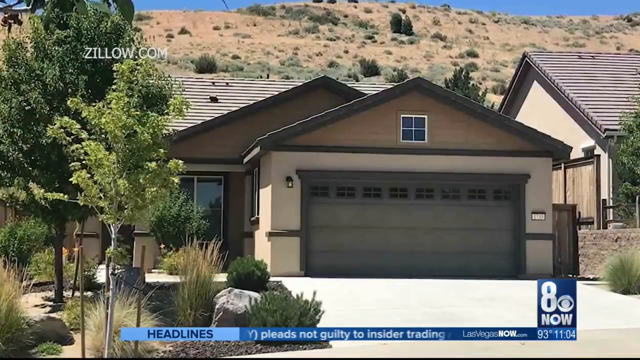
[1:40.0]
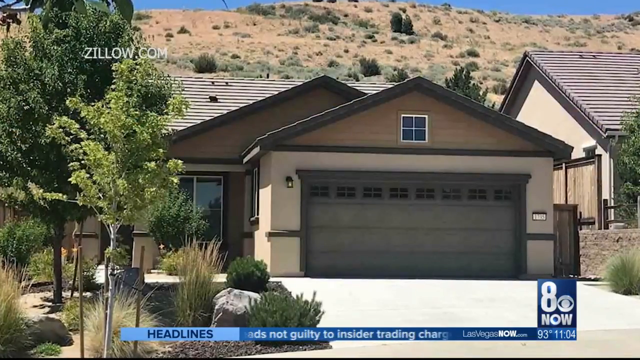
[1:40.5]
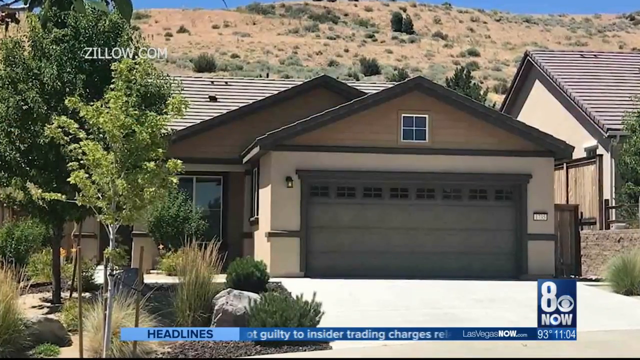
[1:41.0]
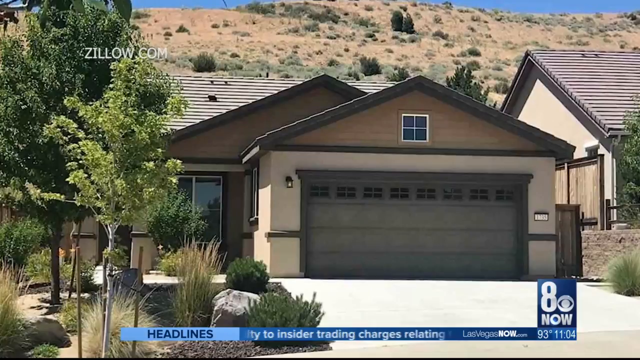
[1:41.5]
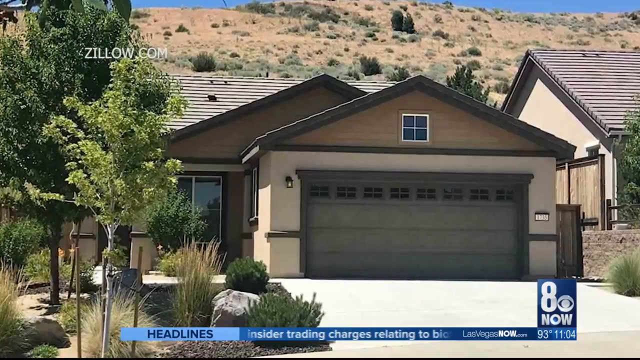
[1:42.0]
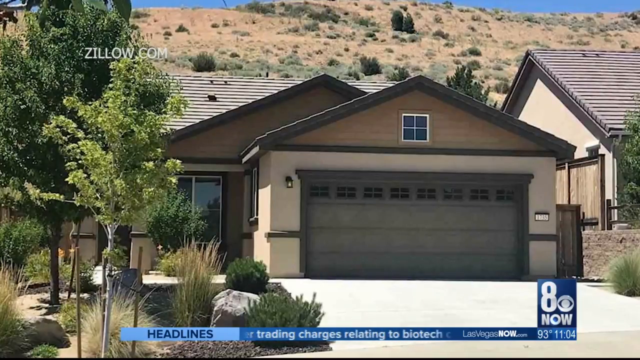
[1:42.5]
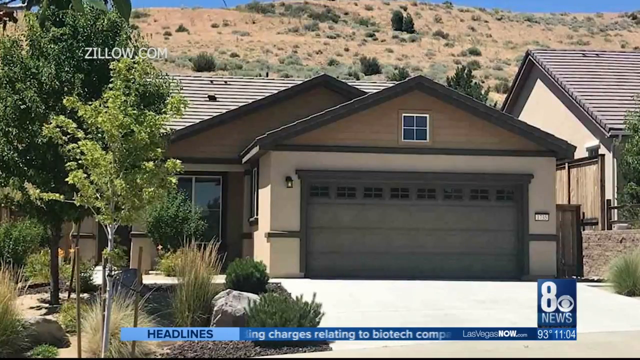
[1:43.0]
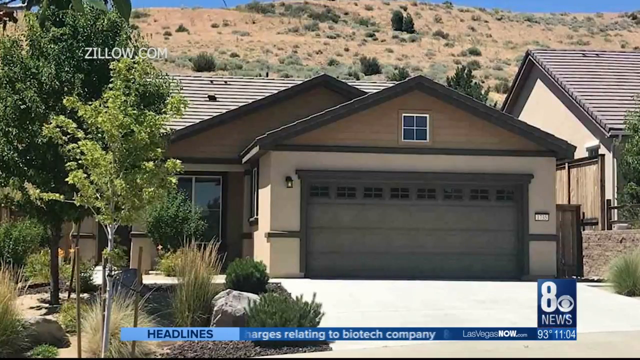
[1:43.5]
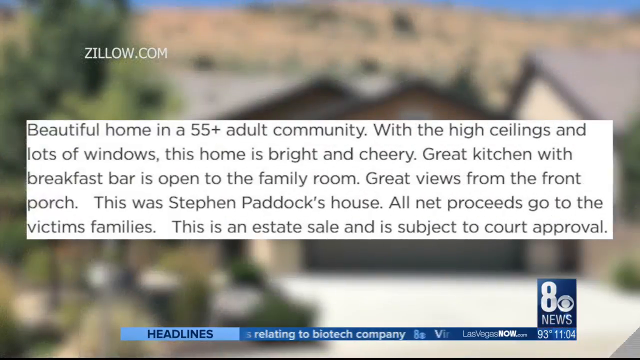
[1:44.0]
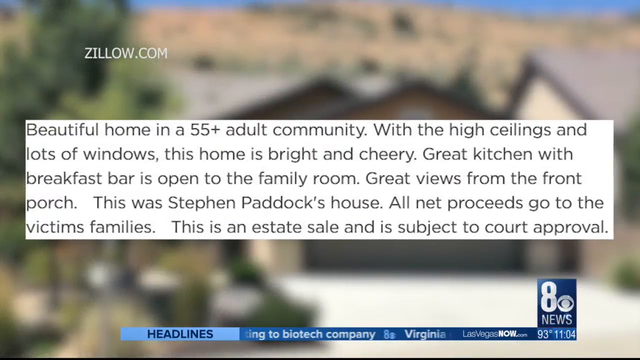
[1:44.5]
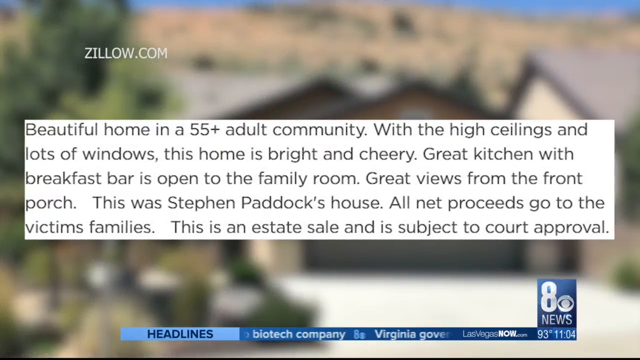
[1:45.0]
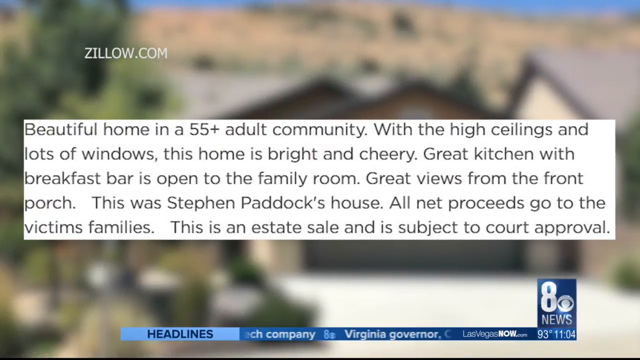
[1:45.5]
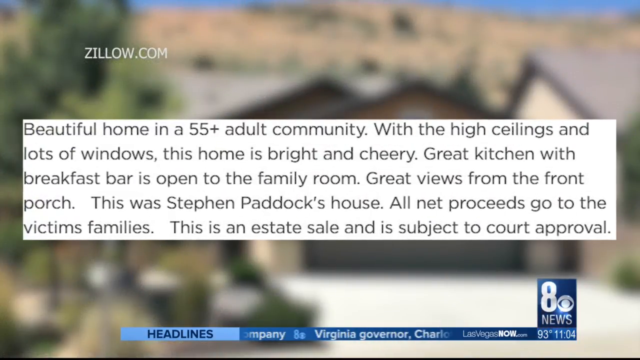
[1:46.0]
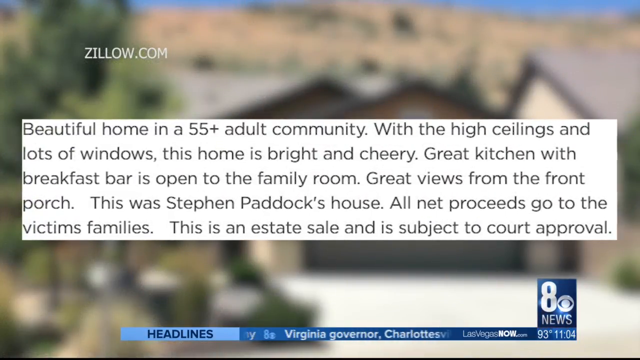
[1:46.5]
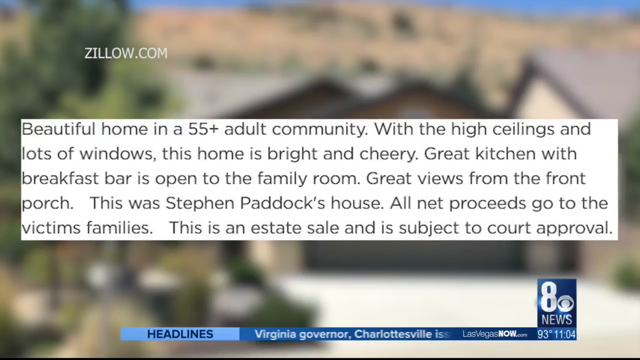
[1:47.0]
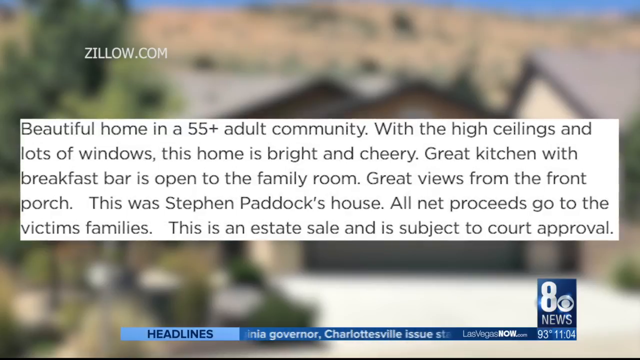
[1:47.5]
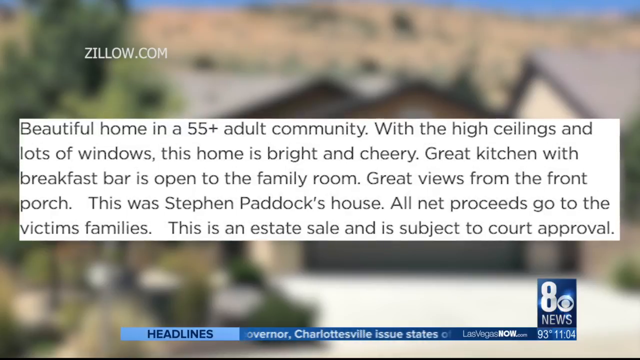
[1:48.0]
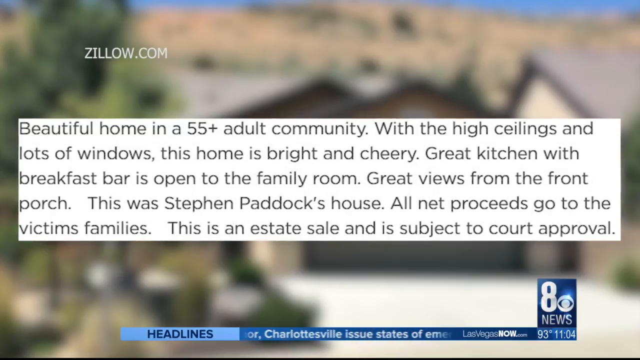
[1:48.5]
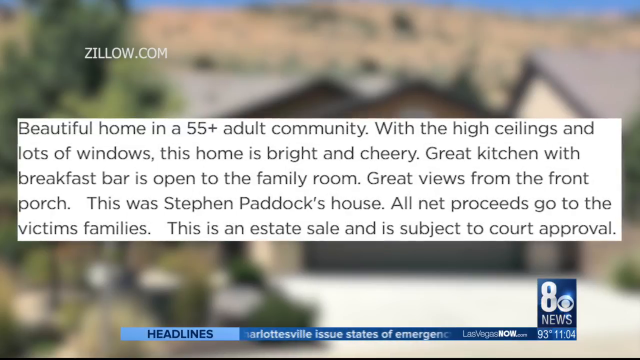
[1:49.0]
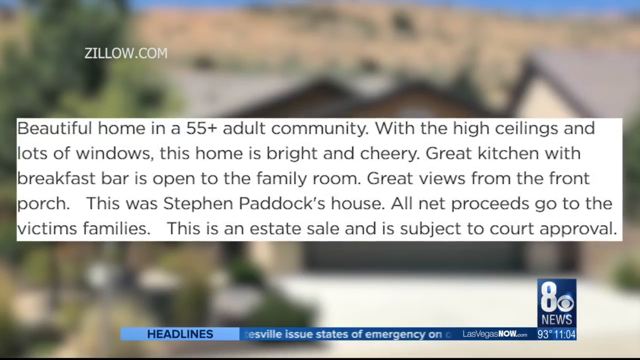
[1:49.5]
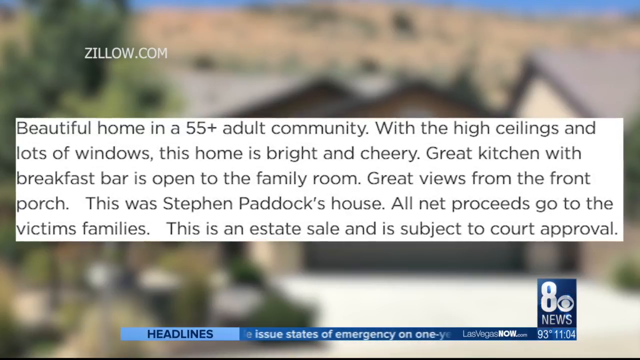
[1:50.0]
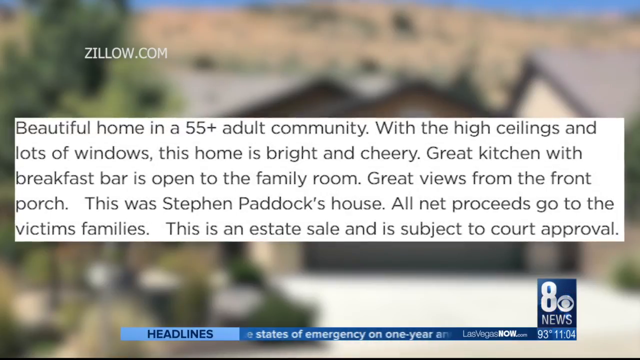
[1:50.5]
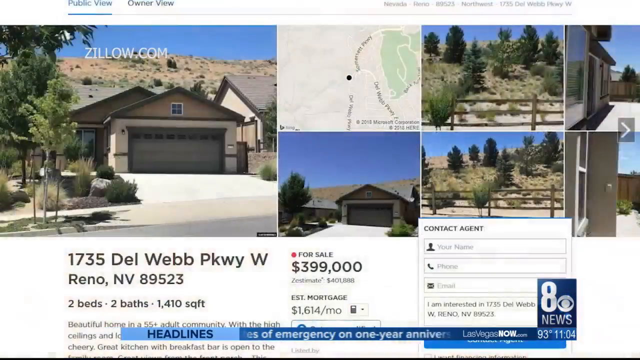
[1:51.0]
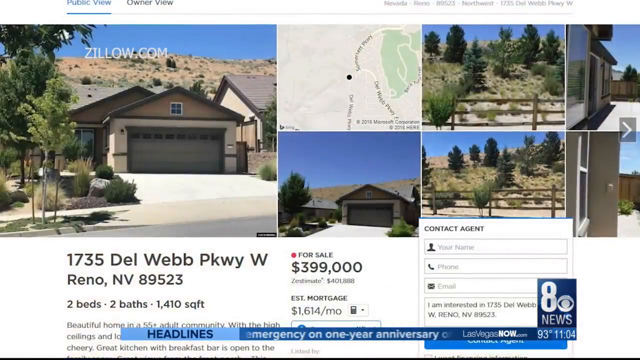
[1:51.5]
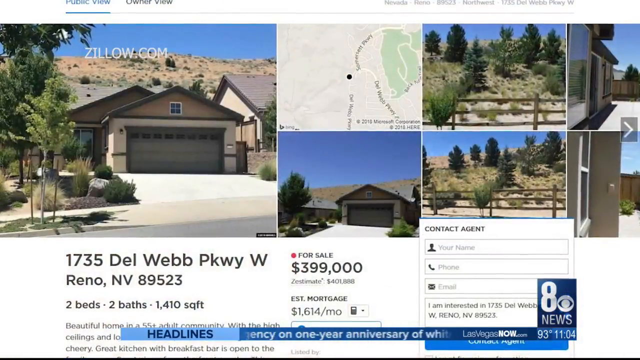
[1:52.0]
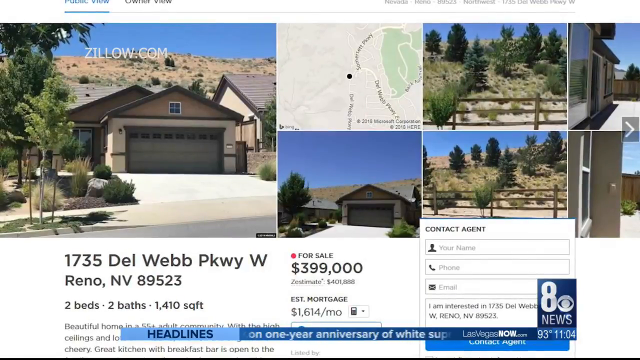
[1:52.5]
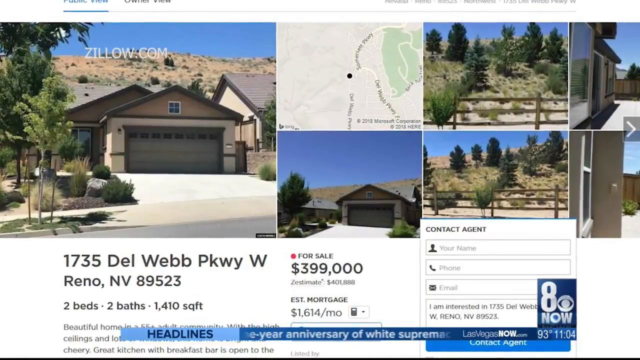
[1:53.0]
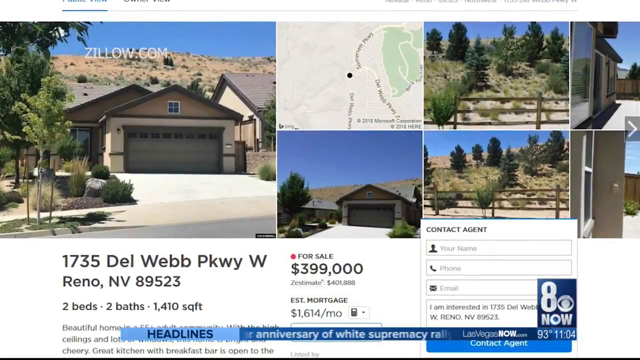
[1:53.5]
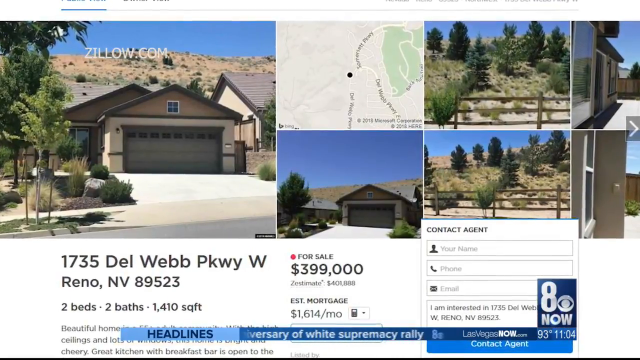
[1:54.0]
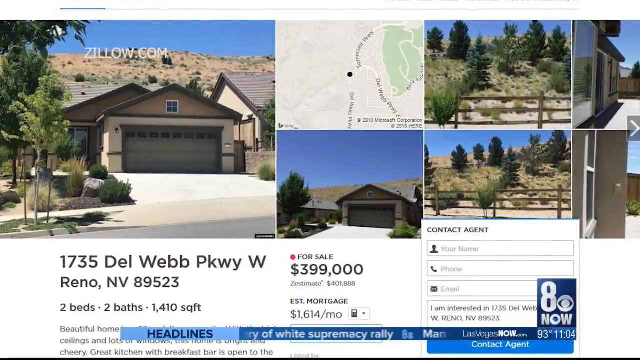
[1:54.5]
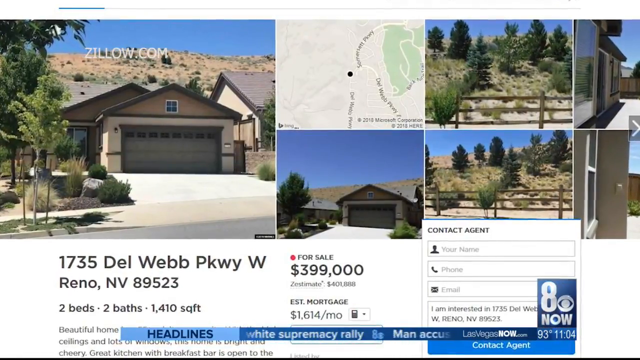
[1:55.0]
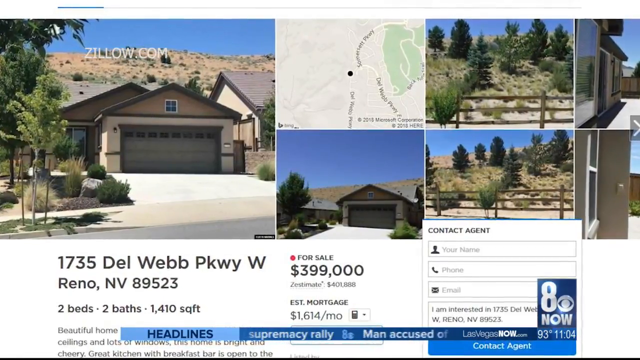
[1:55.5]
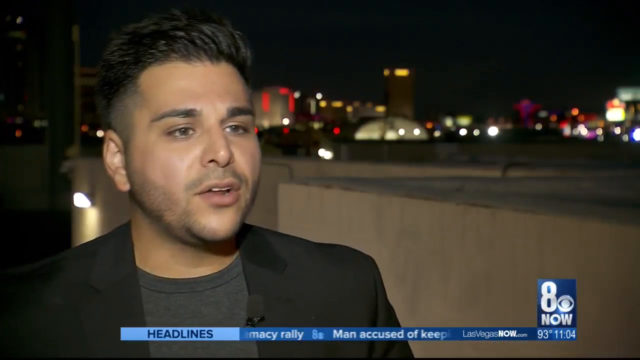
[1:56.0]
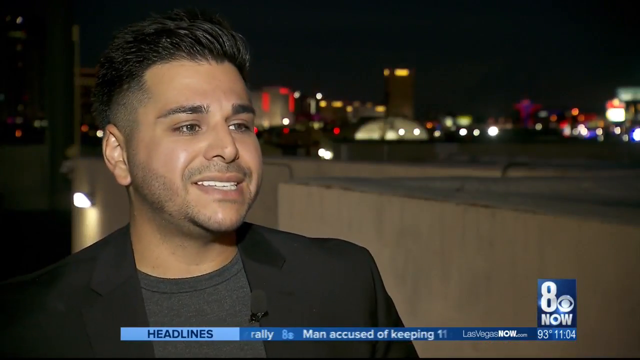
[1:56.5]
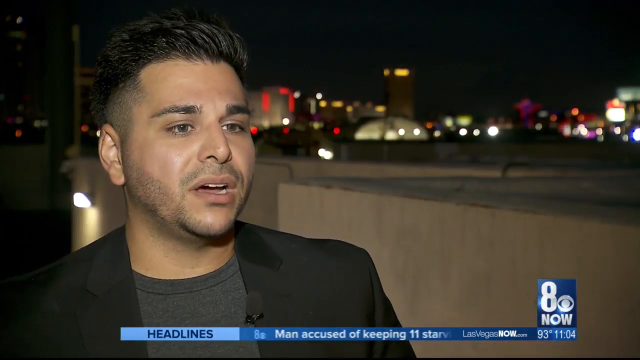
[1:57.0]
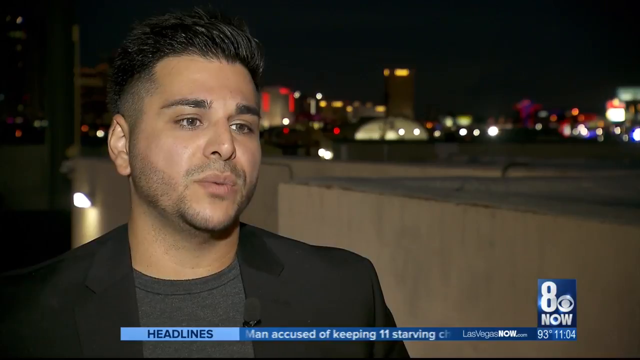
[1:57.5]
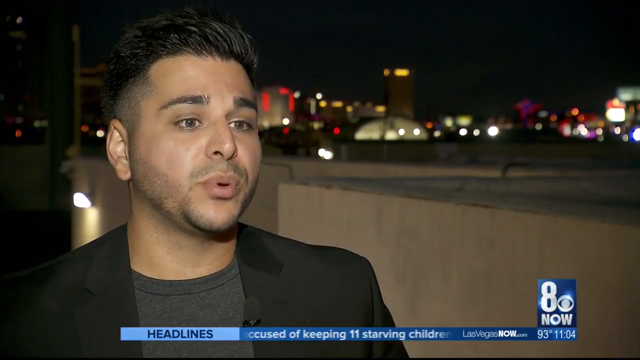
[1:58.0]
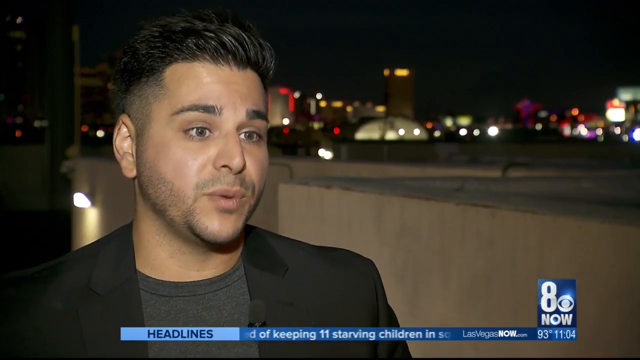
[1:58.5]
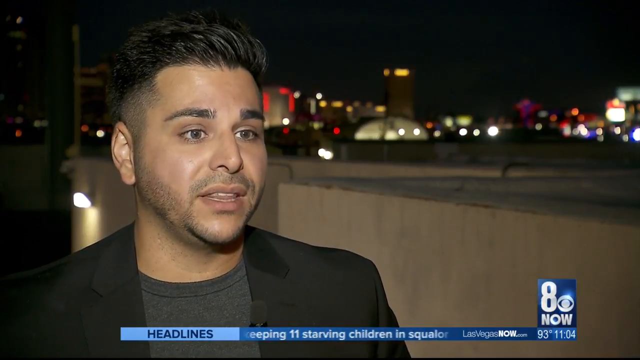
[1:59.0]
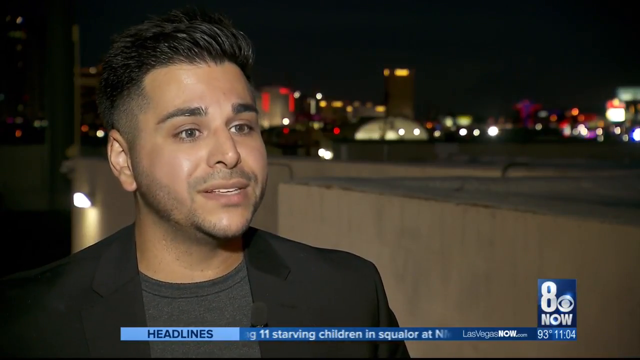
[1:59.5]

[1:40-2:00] The house is shown from the outside, with a mountain or hill in the background. Text describes it: "beautiful home in a 55 plus adult community with the high ceilings and lots of windows. This home is bright and cheery. Great kitchen with breakfast bar is open to the family room. Great views from the front porch. This was Stephen Paddock's home. All net proceeds to go to the victim's family. This is an estate sale and is subject to court approval." The video then moves to the online listing for 1735 Del Webb, a two-bed house for sale at roughly $400,000, with the agent's contact details visible on screen and pictures showing the location and the outside of the house.